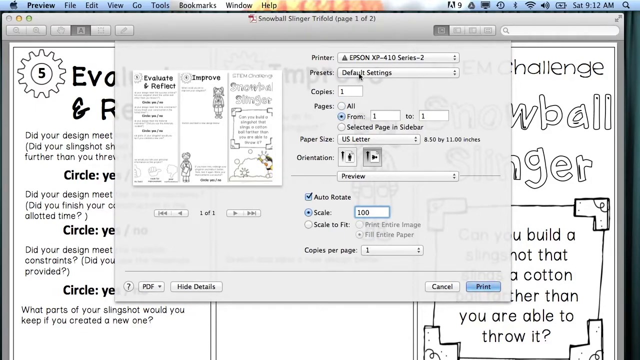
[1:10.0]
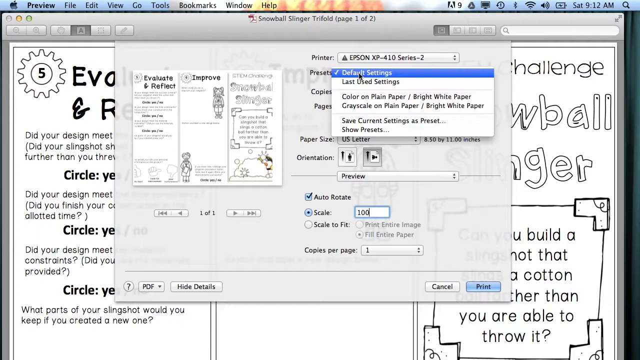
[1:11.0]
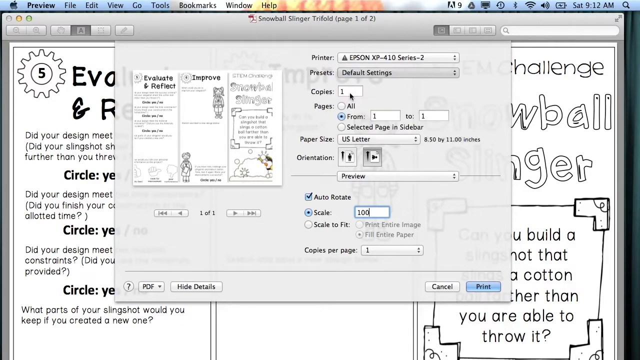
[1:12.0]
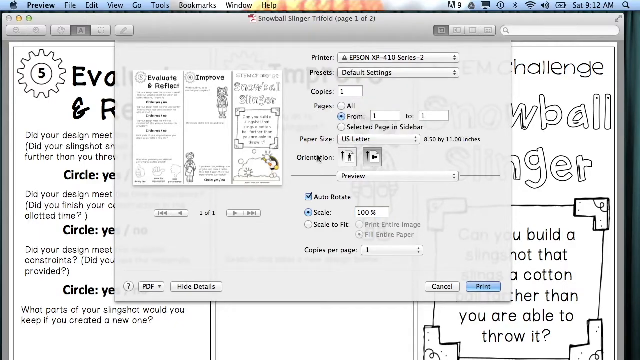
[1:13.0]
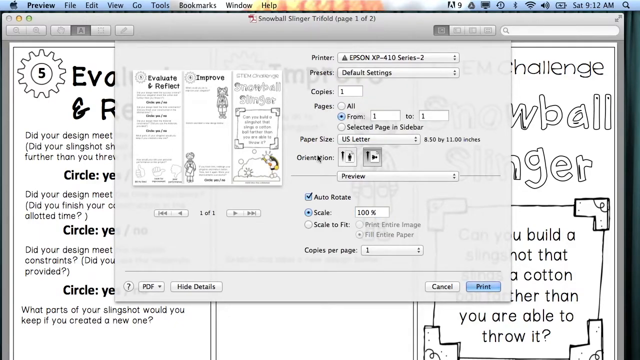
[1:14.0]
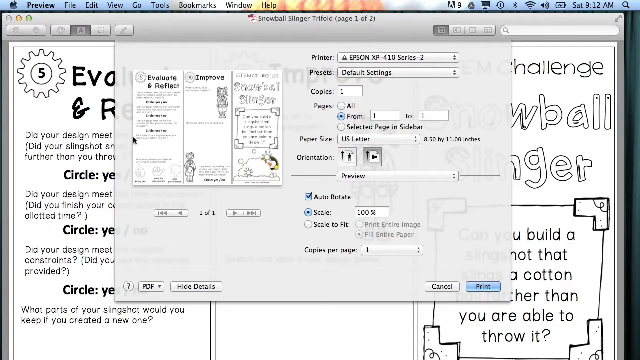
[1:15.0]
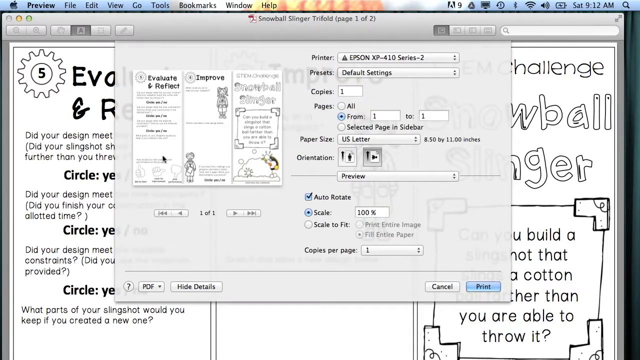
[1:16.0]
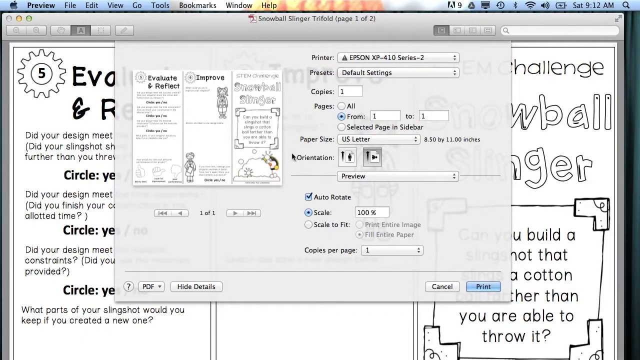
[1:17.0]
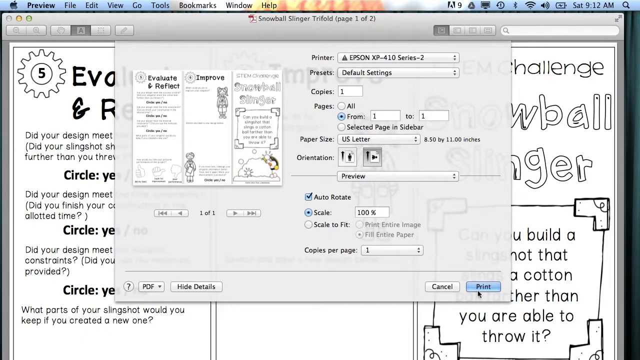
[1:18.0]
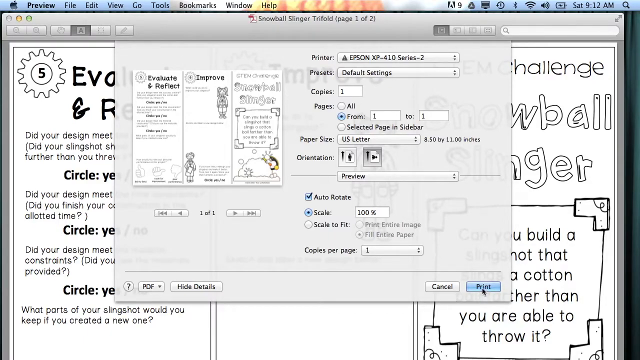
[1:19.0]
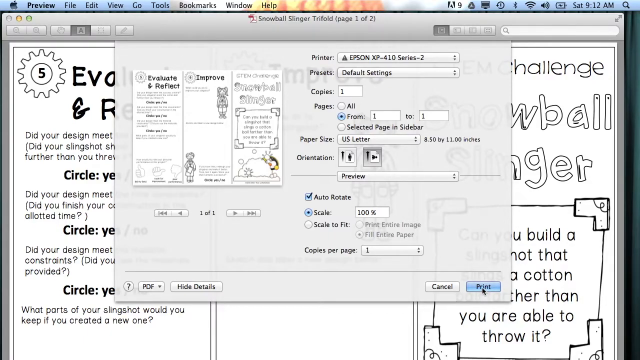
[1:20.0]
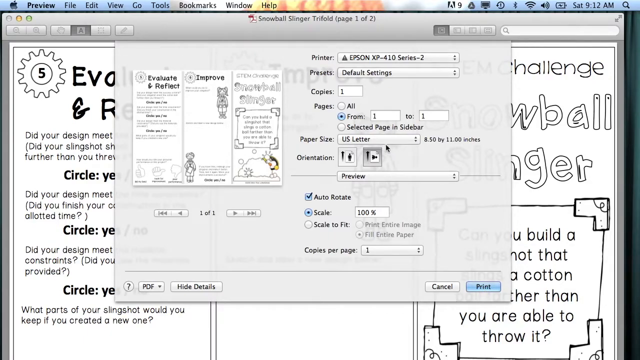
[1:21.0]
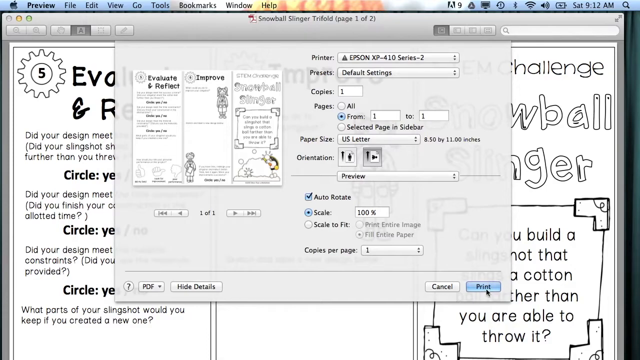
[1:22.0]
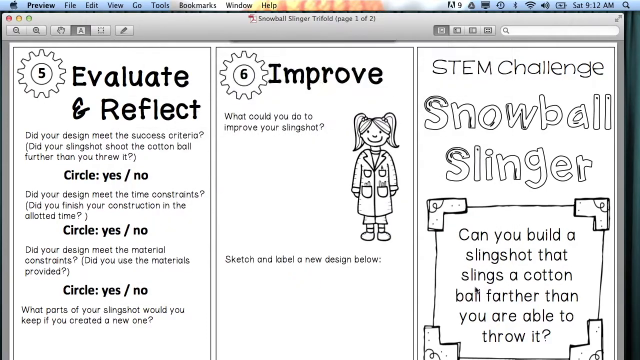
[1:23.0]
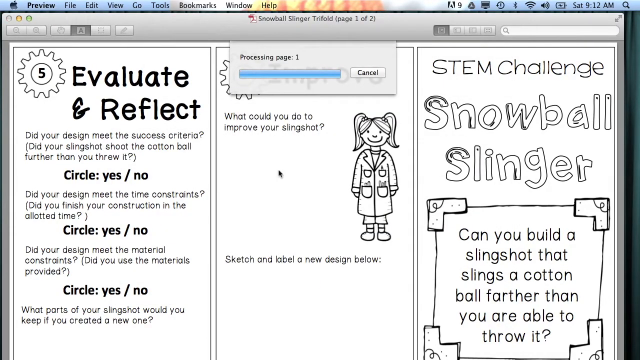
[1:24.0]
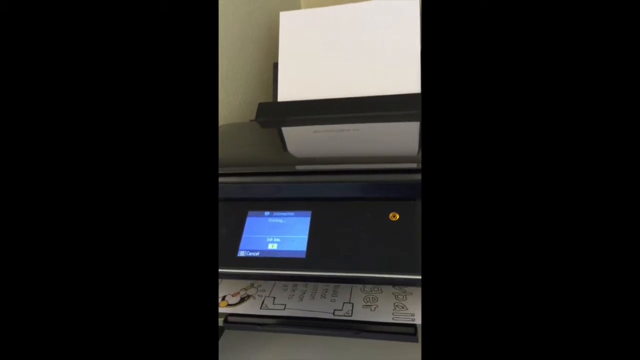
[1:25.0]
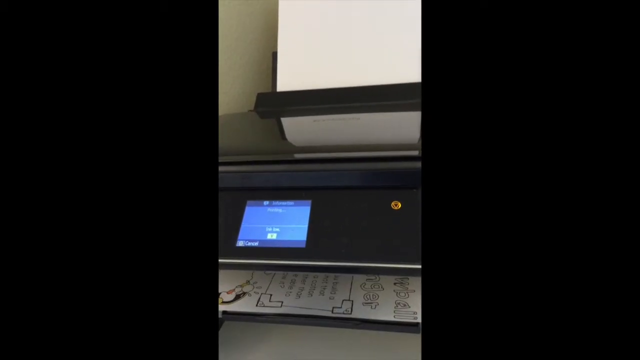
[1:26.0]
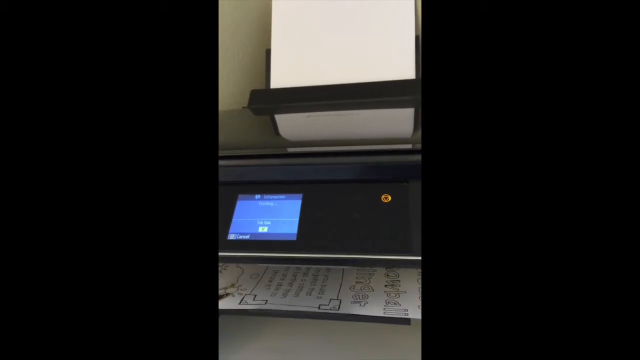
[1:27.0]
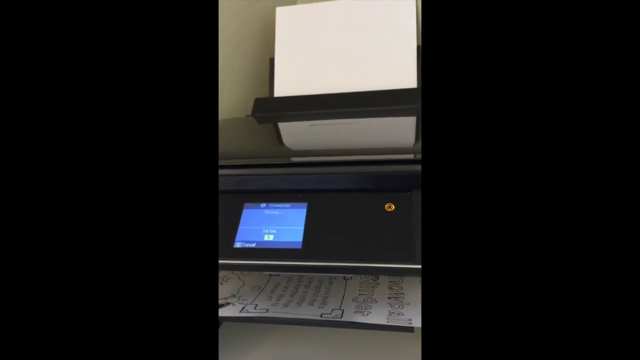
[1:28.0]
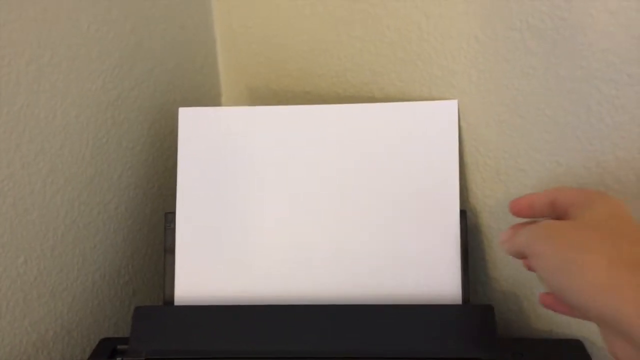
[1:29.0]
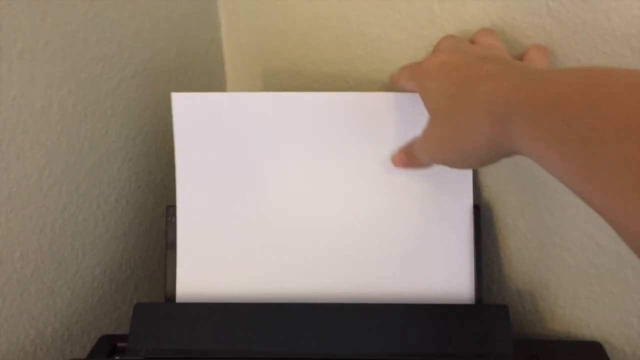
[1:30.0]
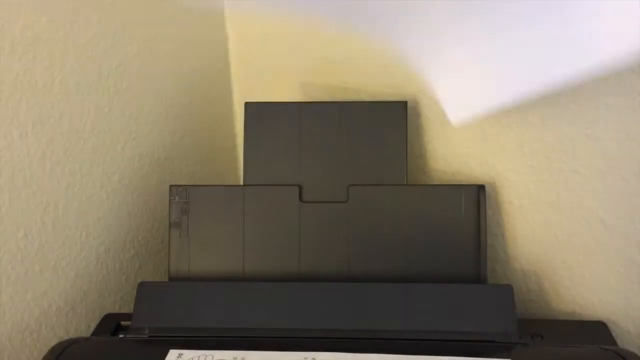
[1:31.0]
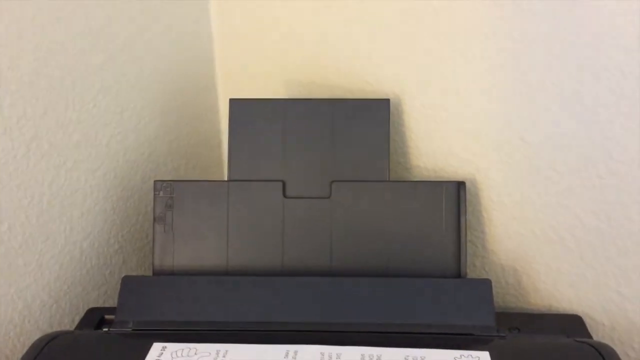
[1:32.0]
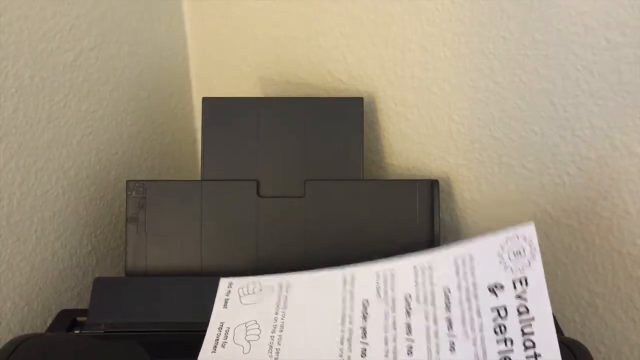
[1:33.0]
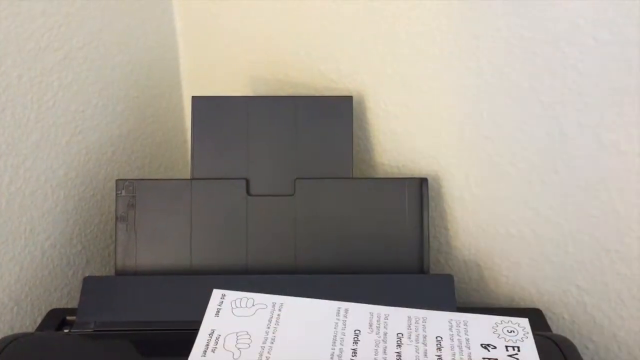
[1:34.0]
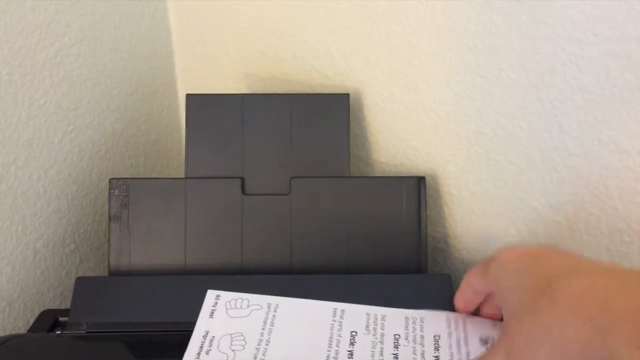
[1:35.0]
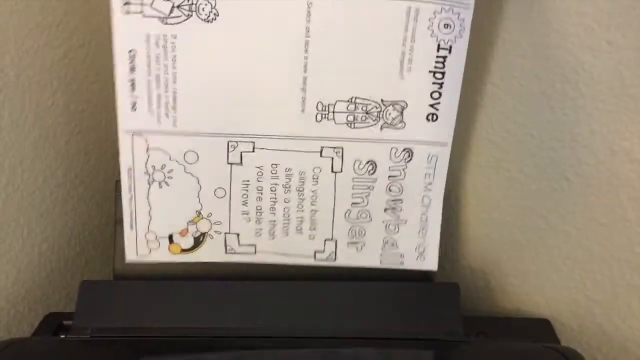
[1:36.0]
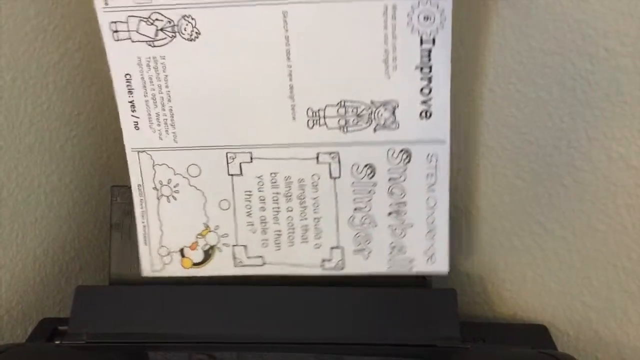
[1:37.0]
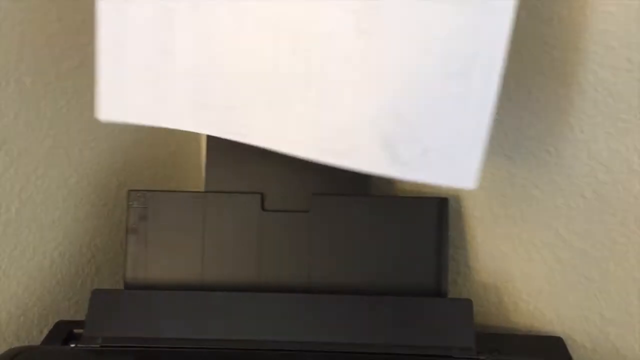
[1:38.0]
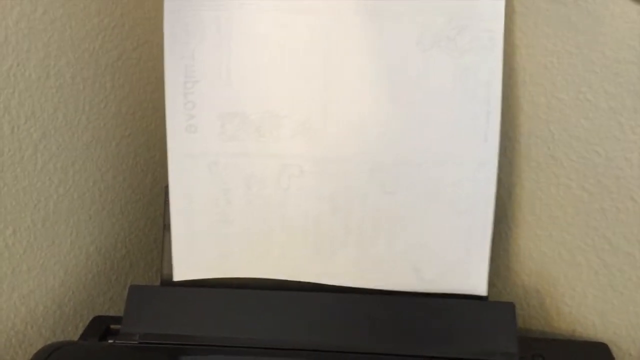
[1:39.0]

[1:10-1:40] The girl sets the presets to default settings and selects the printer Epson XP. She sets one copy, pages from 1 to 1, paper size US letter, 8.5 by 11 inches, orientation upright, auto-rotate, scale 100%, and one copy per page. Behind the print window, the whole snowball slingers comic to be printed is visible. She clicks print. The scene returns to the paper, and she takes out the printed page. The paper does not look very good. She then puts it back into the printer, apparently to print on it again.